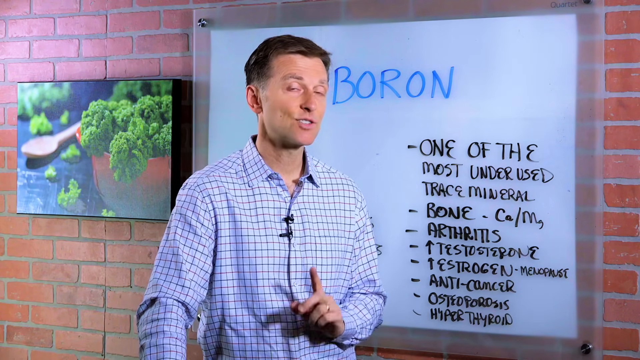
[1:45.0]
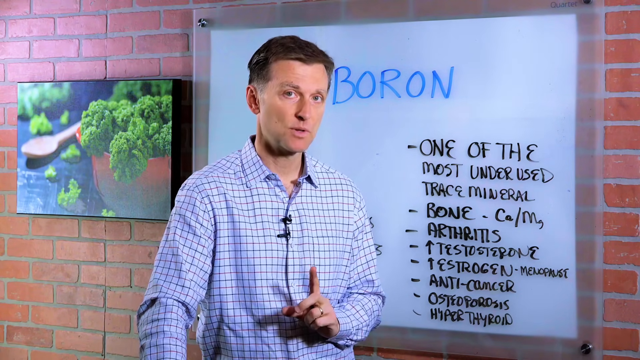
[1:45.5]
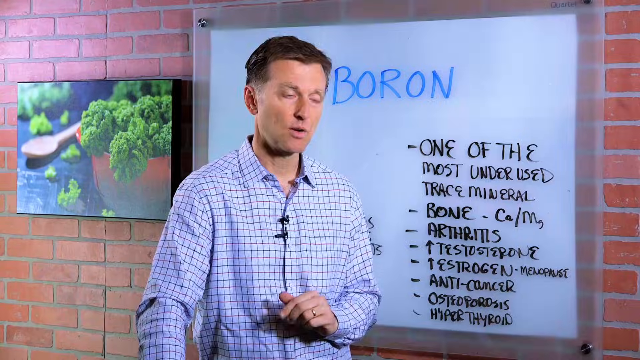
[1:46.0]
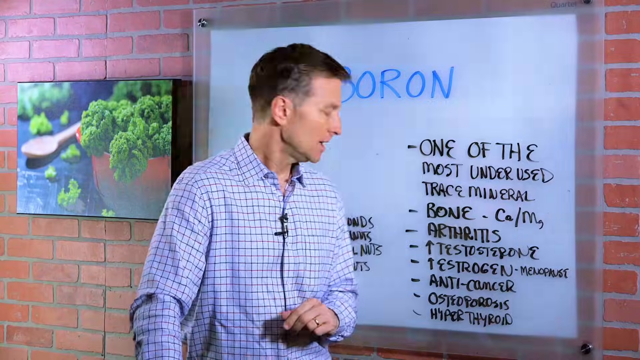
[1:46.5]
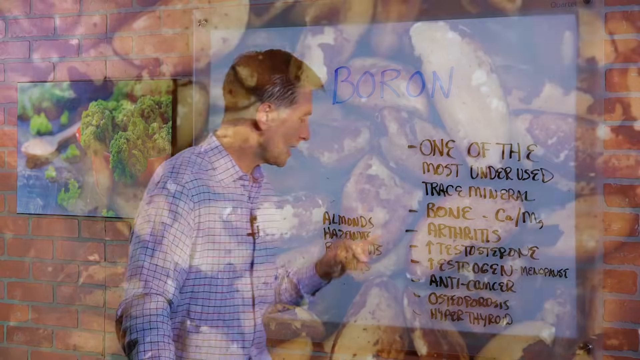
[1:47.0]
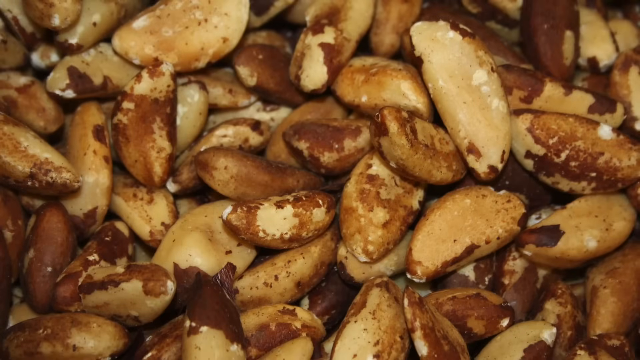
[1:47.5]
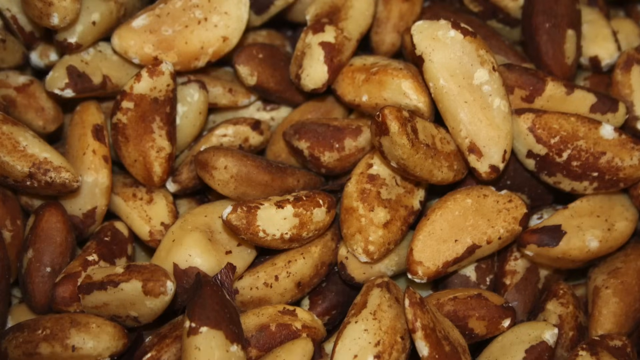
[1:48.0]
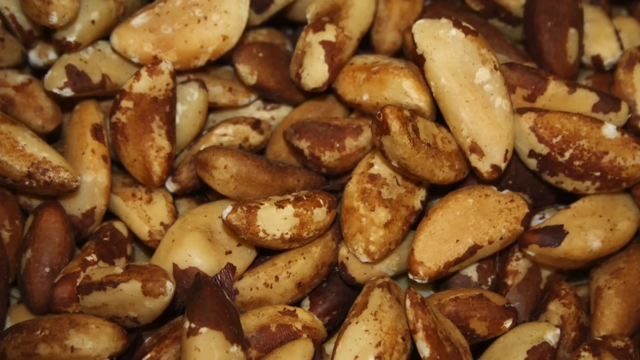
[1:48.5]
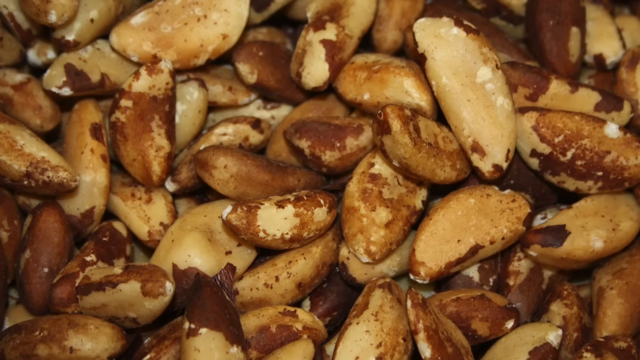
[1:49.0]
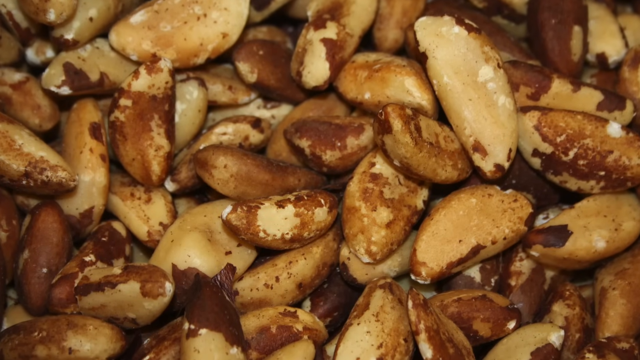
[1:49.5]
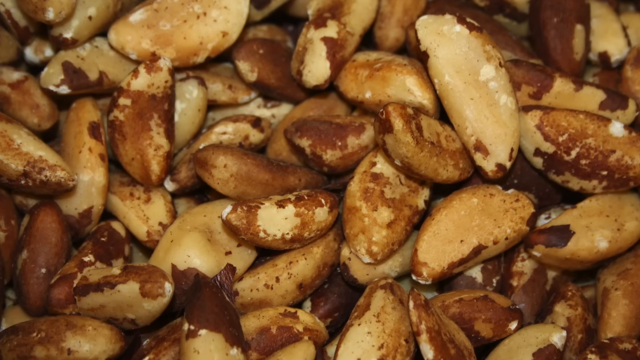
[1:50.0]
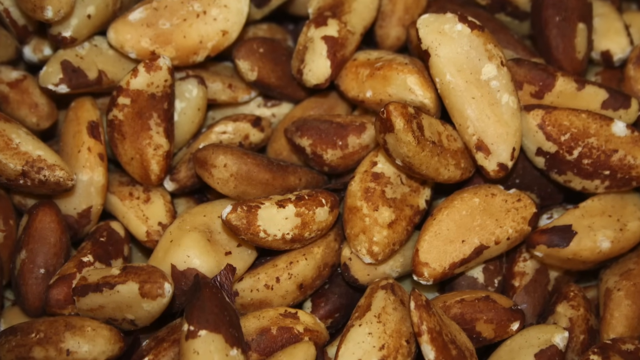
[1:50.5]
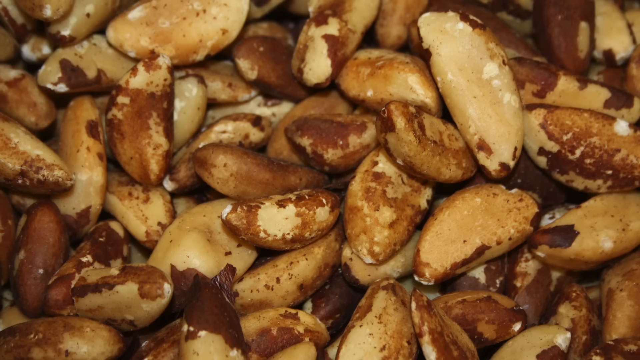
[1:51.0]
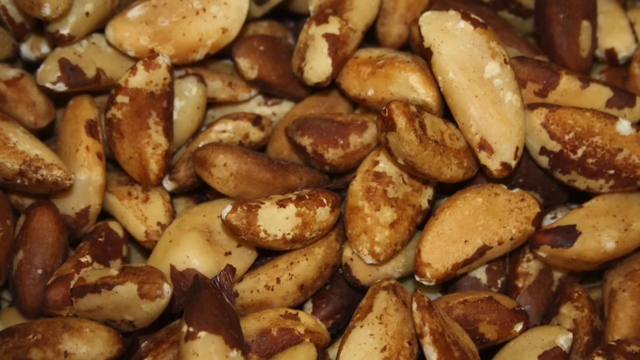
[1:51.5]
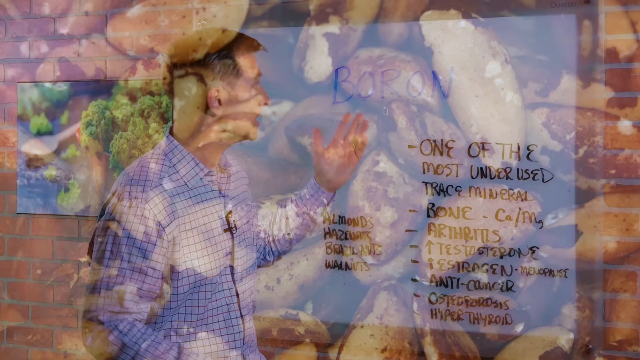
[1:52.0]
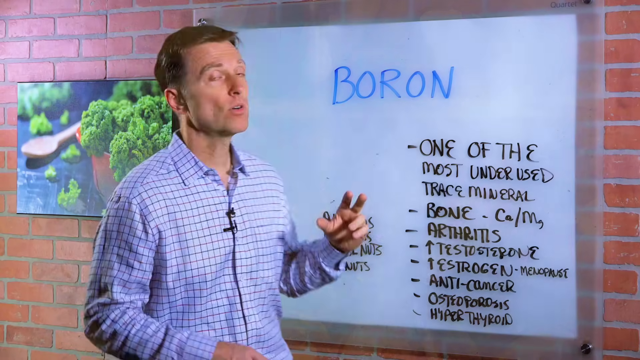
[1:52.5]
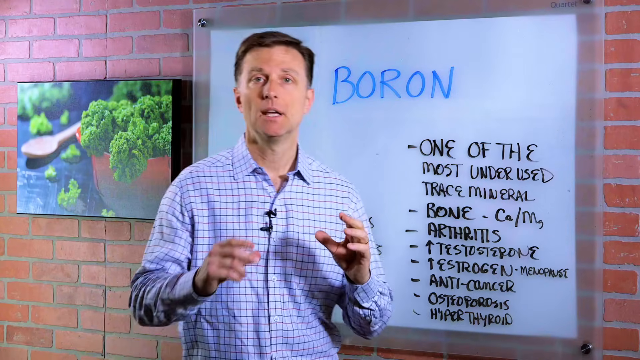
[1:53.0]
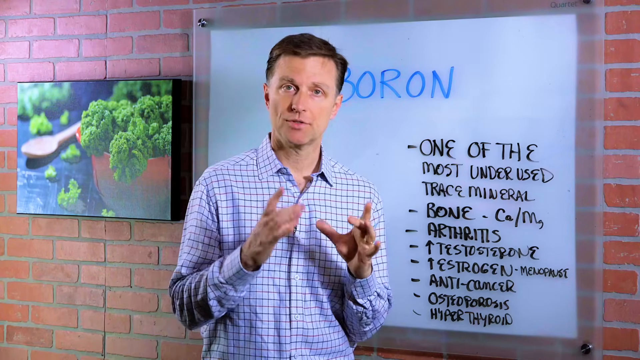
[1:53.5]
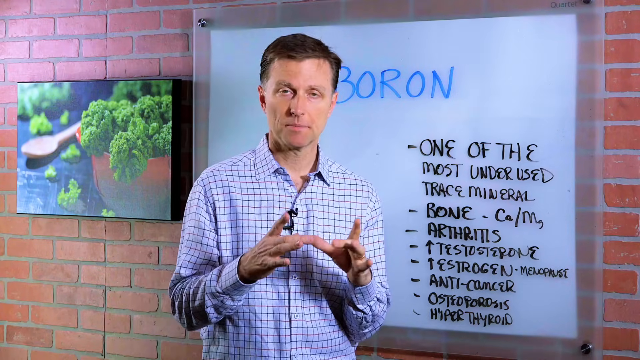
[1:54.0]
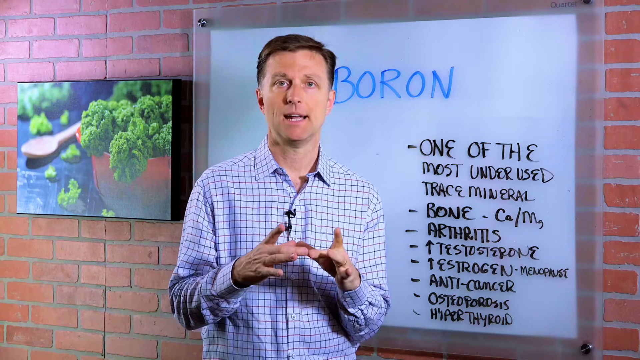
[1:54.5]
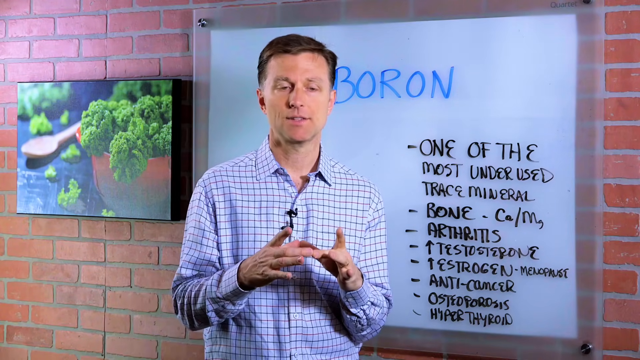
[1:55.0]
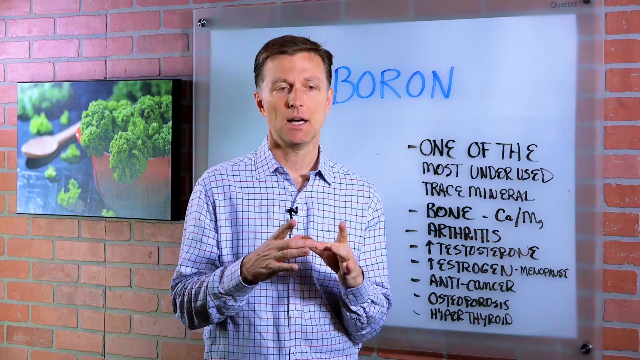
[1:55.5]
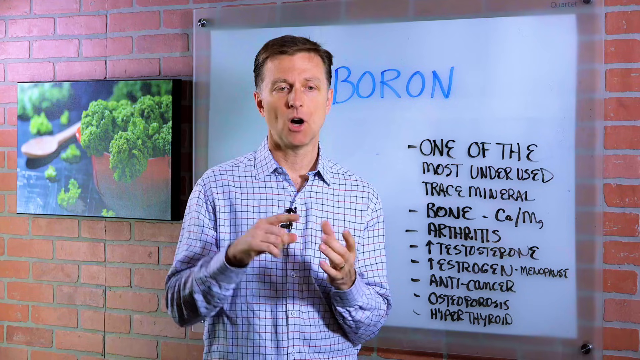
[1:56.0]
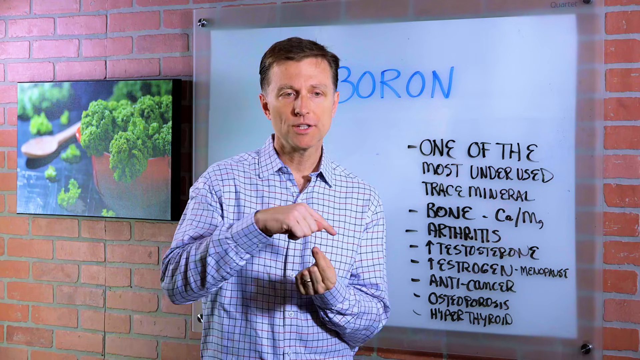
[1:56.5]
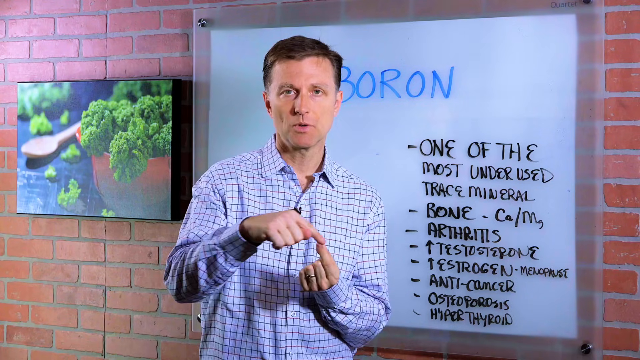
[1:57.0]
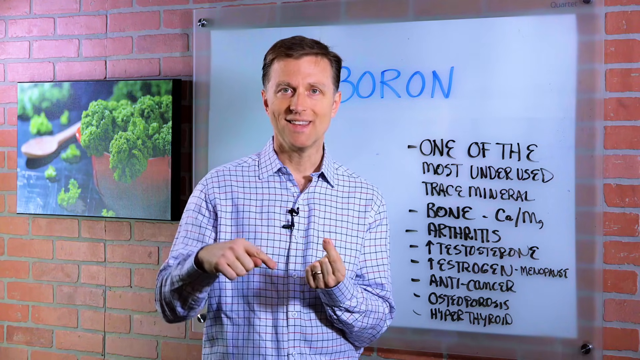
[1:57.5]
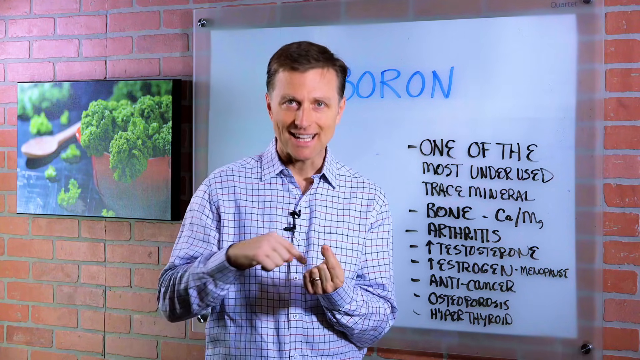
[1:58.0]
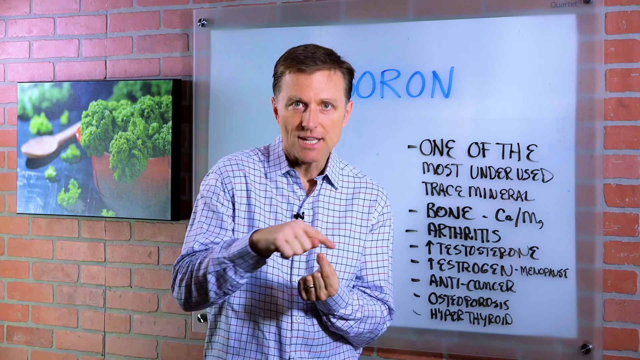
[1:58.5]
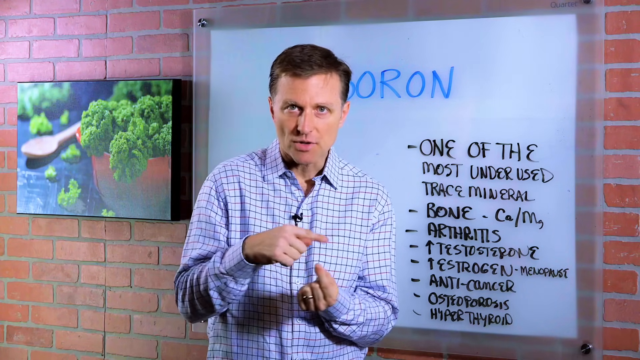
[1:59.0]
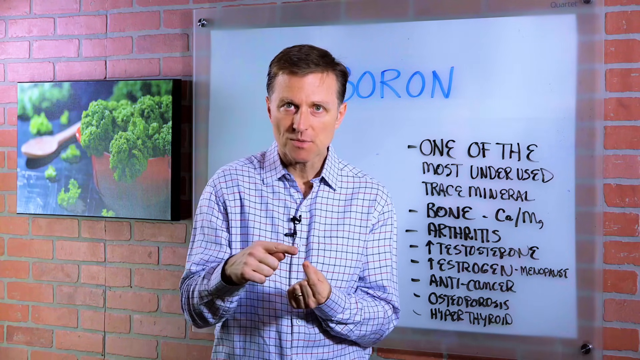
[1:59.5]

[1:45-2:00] A close-up picture of walnuts appears. Then a man wearing a light blue long-sleeve button-up shirt with a black microphone attached stands in front of a white board with the word "Boron" written in blue. Underneath "Boron" it says "one of the most underrated trace minerals," and underneath that "bone," "arthritis," "testosterone," "estrogen," "anti-cancer," "osteoporosis," and "hypothyroid." Beside that writing it also says "almonds, hazelnuts, brazelnuts, and peanuts" in black. The board is up on a maroon brick wall. Beside the board is a black-framed painting of a brown bowl with green broccoli coming out of it, and beside the bowl is a light brown wooden spoon.